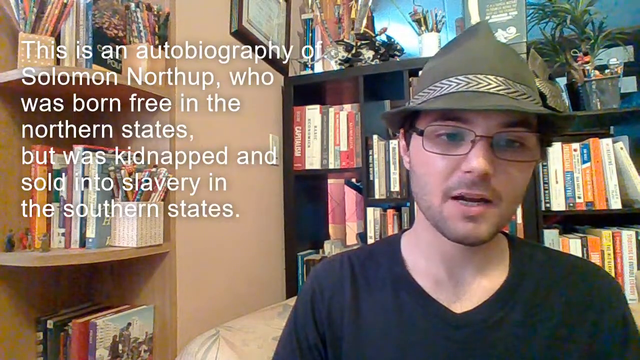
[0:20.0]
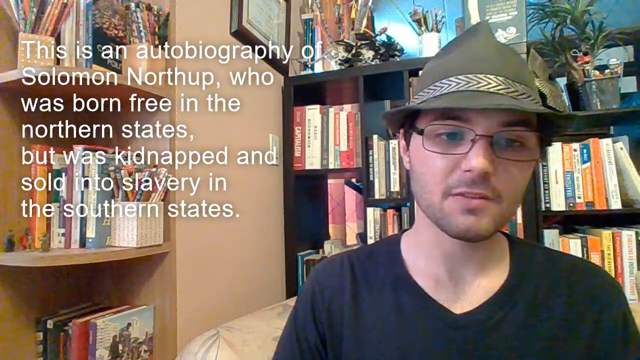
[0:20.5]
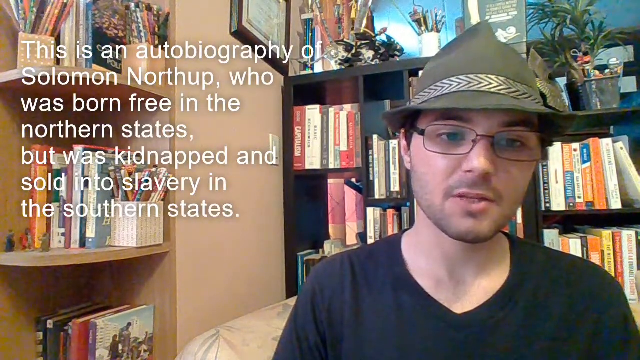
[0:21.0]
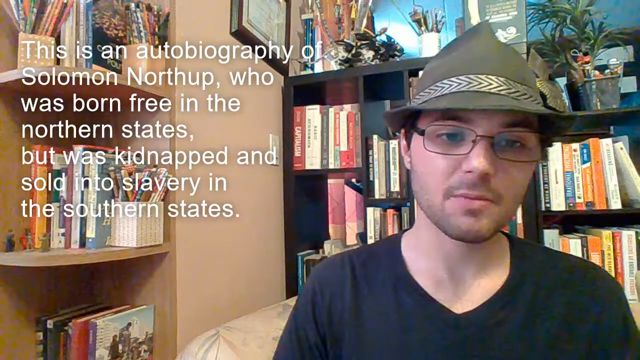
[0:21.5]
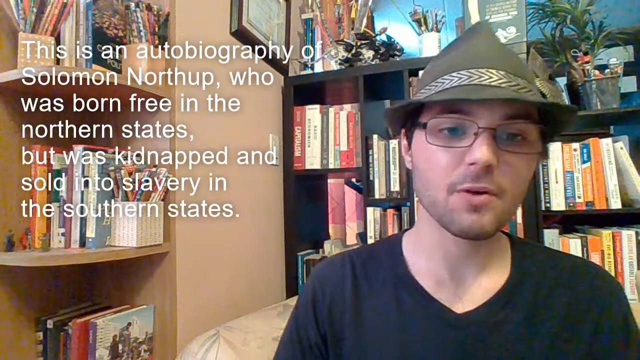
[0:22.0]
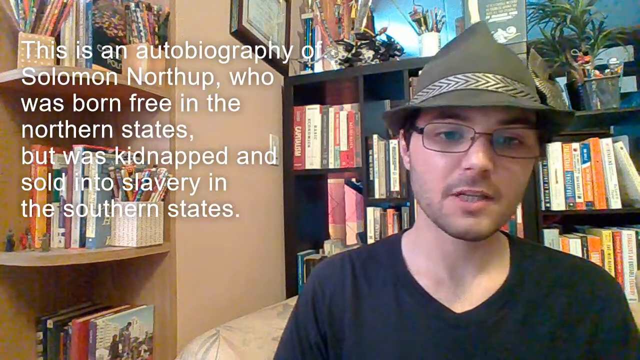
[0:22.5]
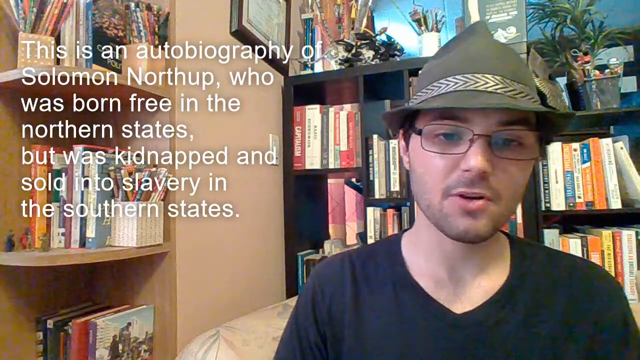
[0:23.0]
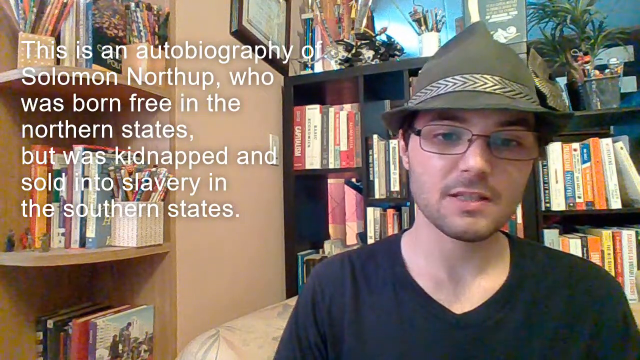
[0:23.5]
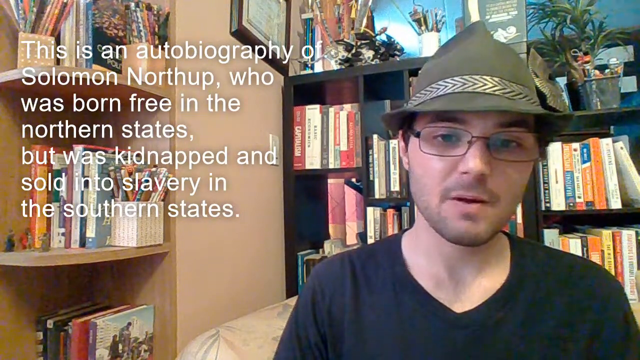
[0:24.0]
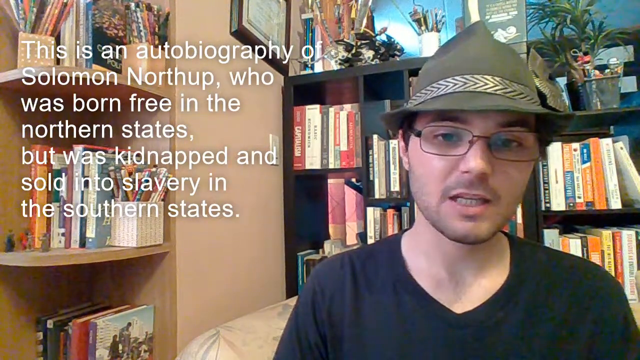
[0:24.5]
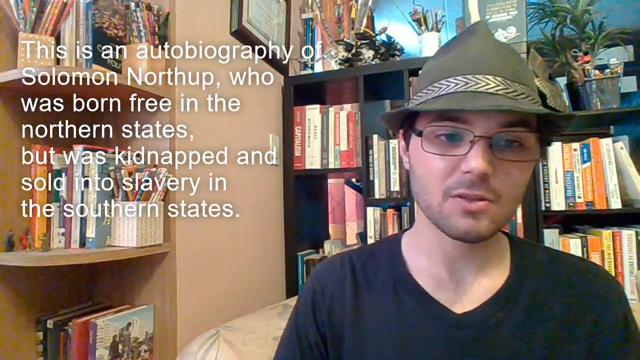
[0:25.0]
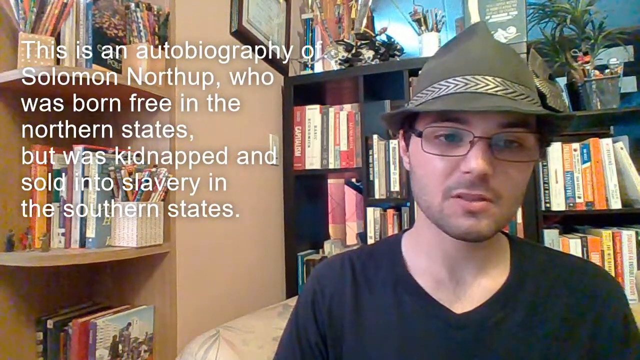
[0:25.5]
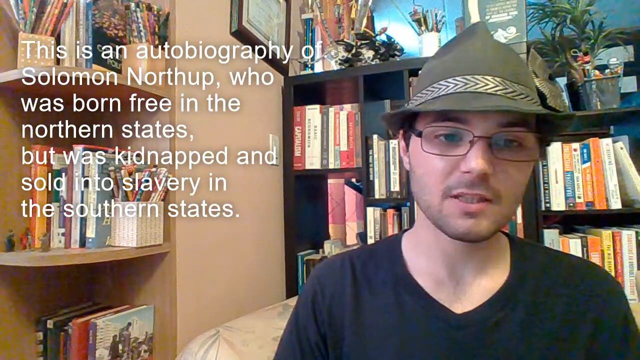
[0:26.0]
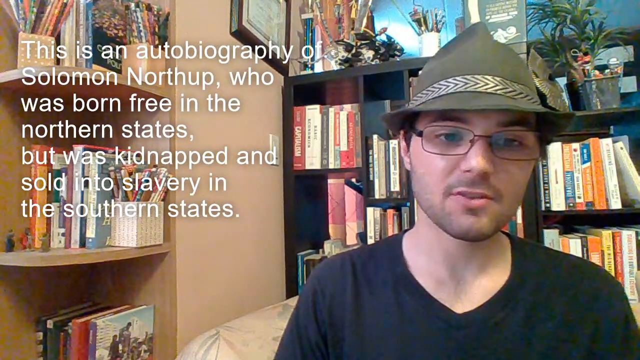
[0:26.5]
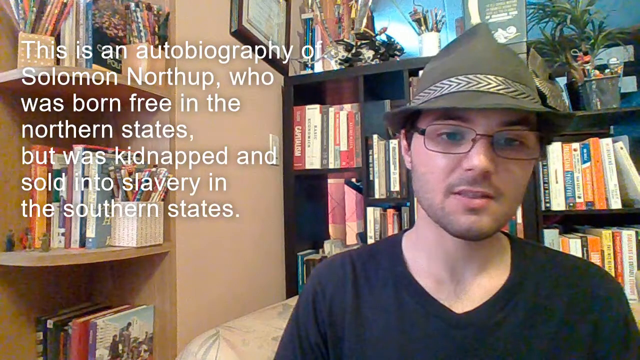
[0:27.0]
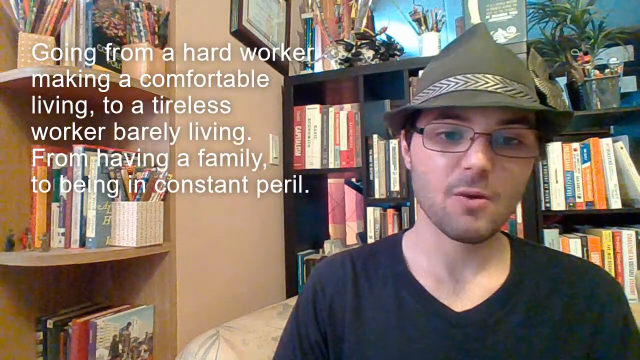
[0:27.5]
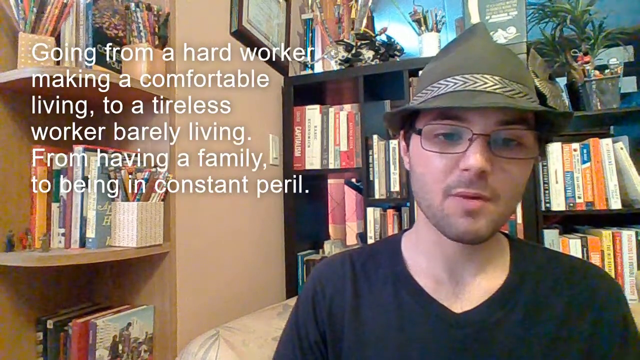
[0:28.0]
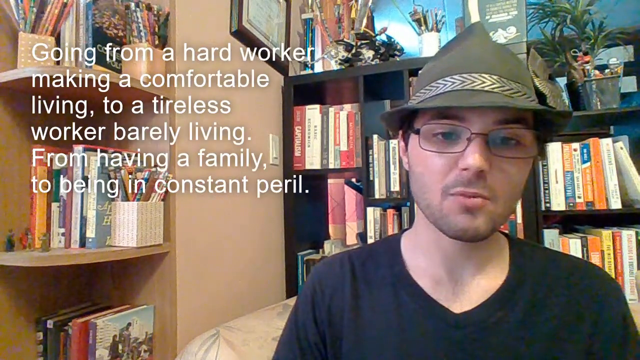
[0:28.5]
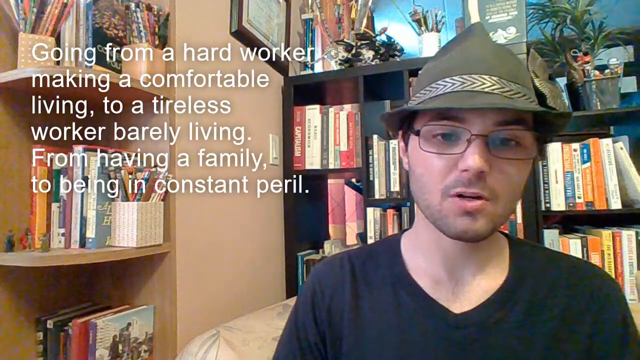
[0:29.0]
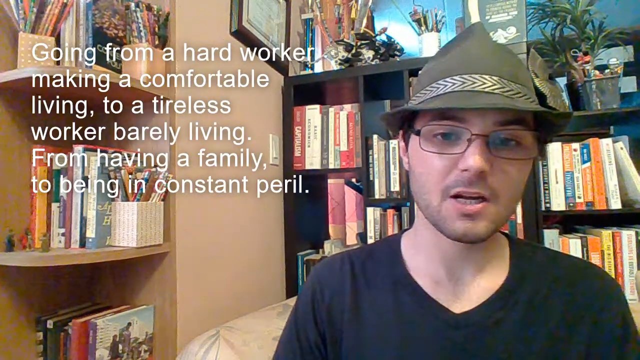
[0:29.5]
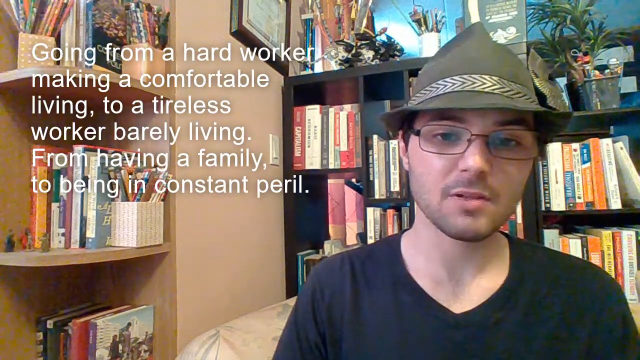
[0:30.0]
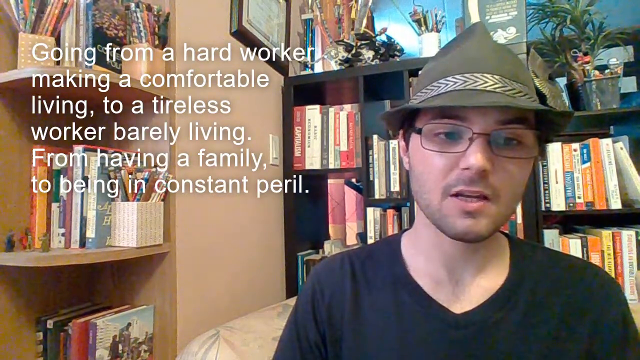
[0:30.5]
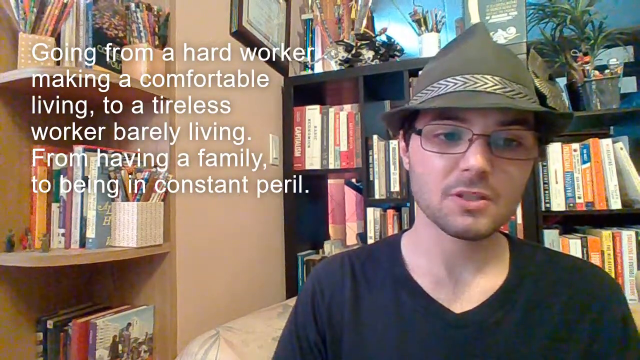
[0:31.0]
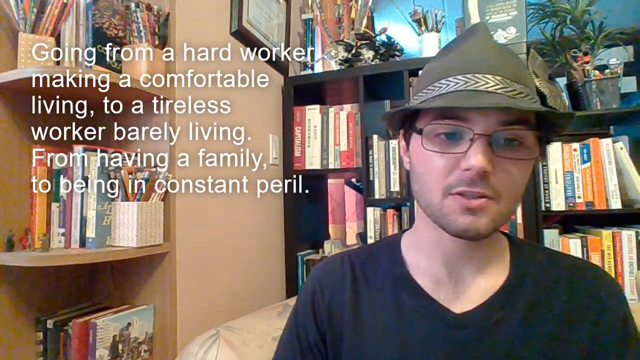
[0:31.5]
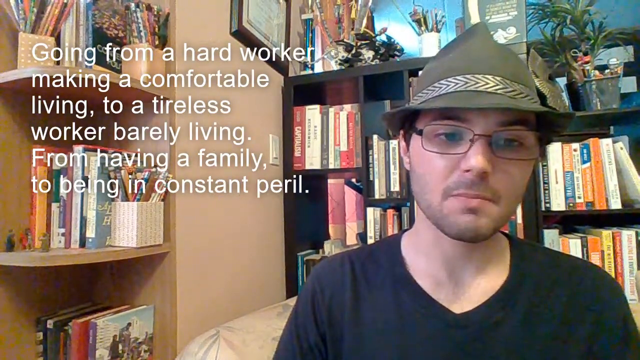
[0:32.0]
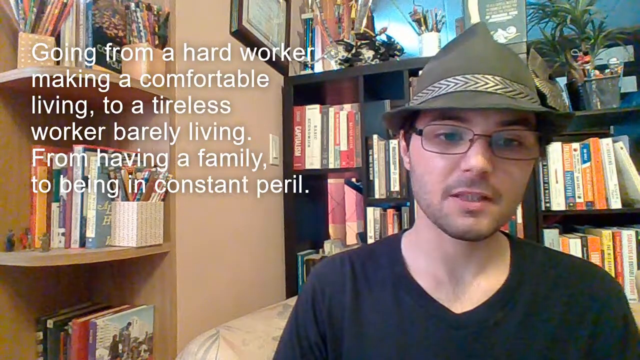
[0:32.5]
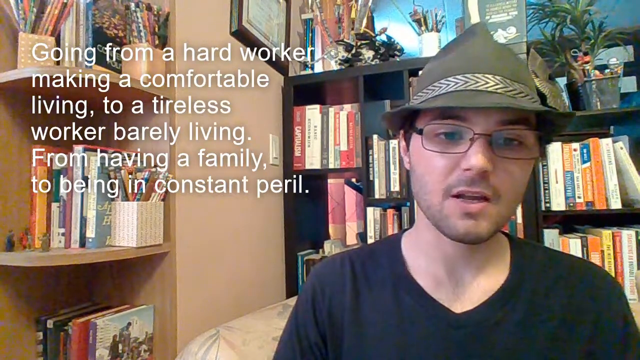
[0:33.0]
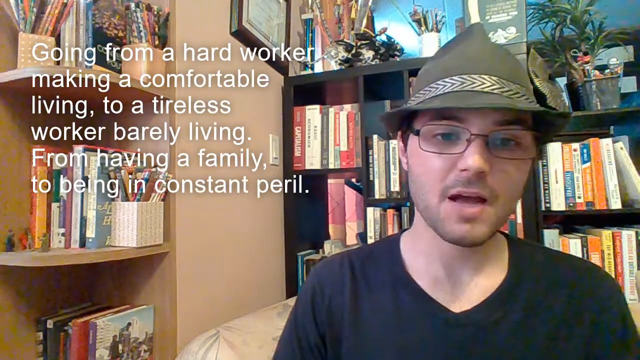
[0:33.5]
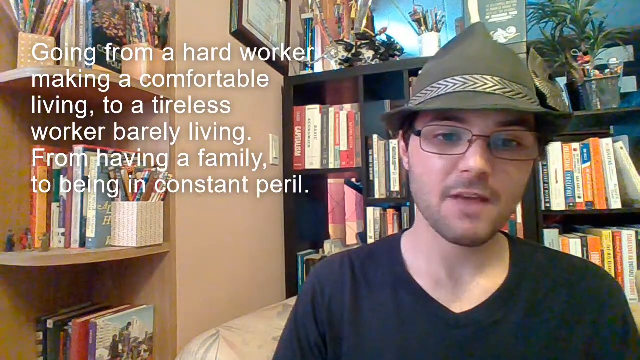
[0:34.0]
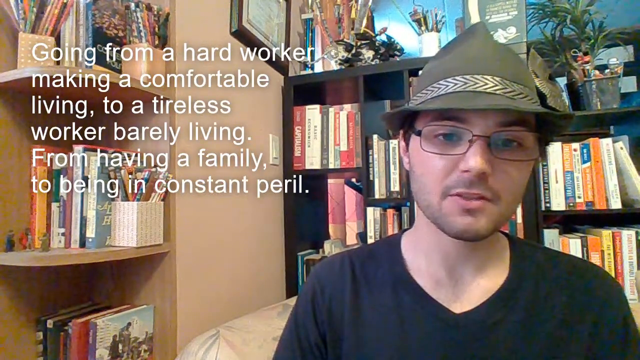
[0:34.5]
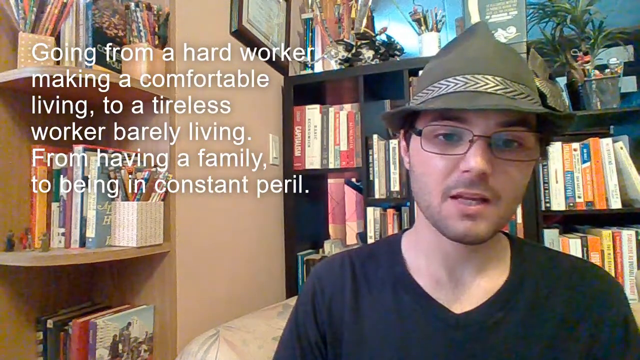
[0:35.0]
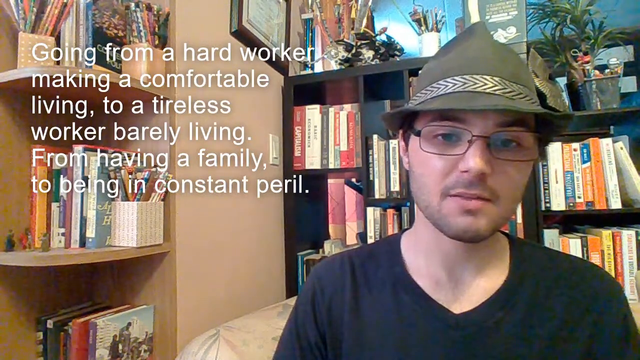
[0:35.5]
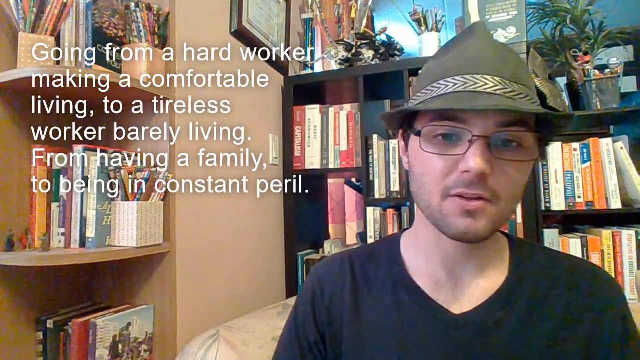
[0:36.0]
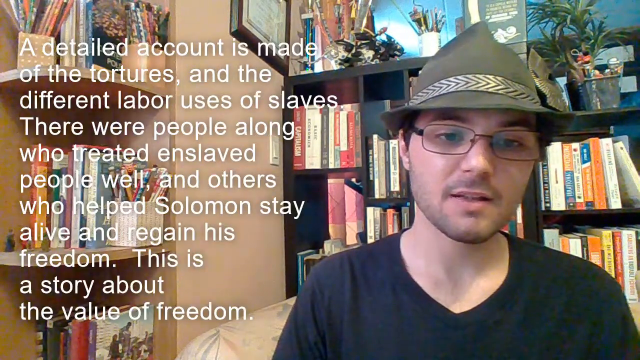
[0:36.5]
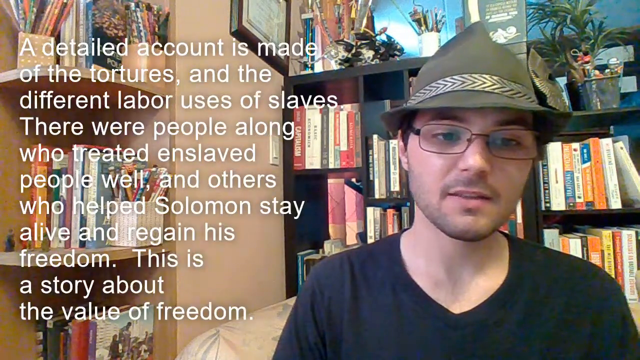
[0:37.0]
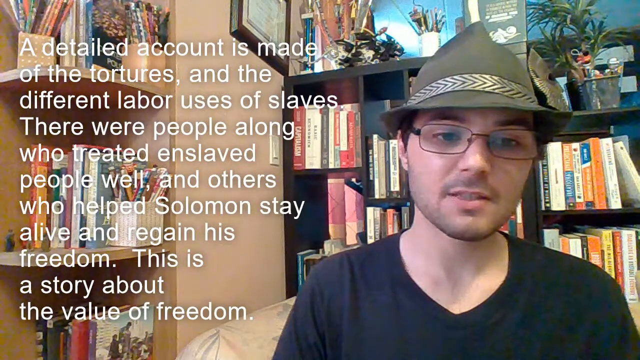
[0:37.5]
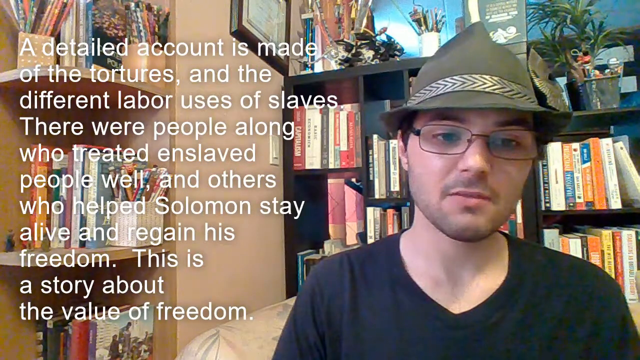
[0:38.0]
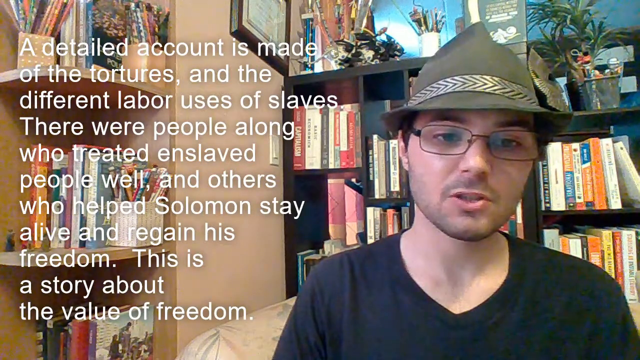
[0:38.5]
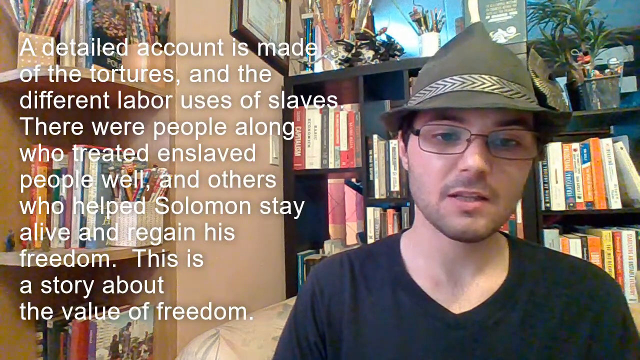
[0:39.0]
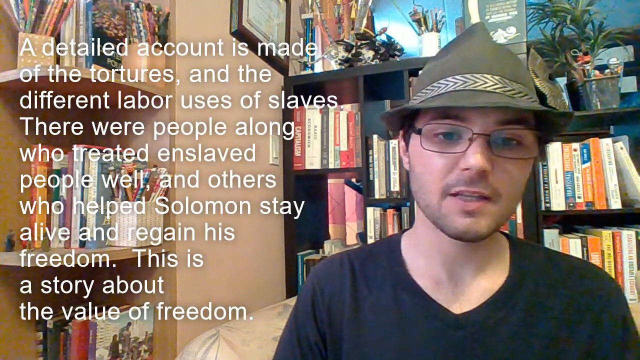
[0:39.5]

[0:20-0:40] The book review continues, apparently presented by a YouTuber, about the autobiography of Solomon Northup. The caption on the screen reads "this is an autobiography of Solomon Northup who was born free in the northern states but was kidnapped and sold into slavery in the southern states. Going from hard worker making a comfortable living to a tireless worker barely living from having a family to being in a constant peril. A detailed account is made of the tortures and the different labor uses of slaves there were people along who treated enslaved people well and others who helped Solomon stay alive and regain his freedom. This is a story about the value of freedom." The setting is an office: behind the YouTuber there is a bookcase with lots of books, and on the right side there are some shelves with books and stationery.